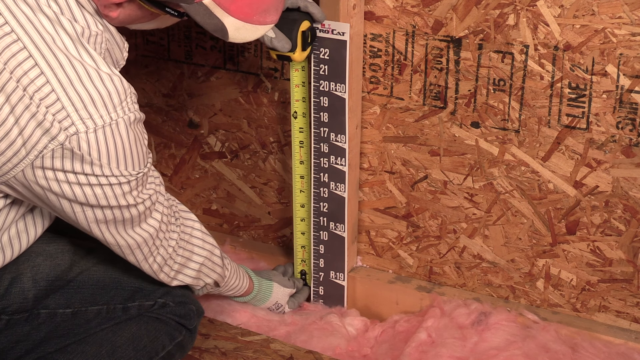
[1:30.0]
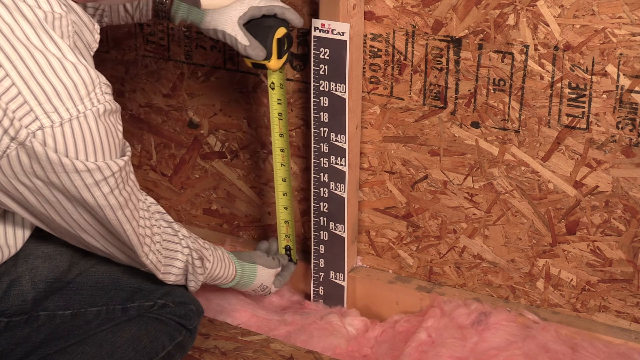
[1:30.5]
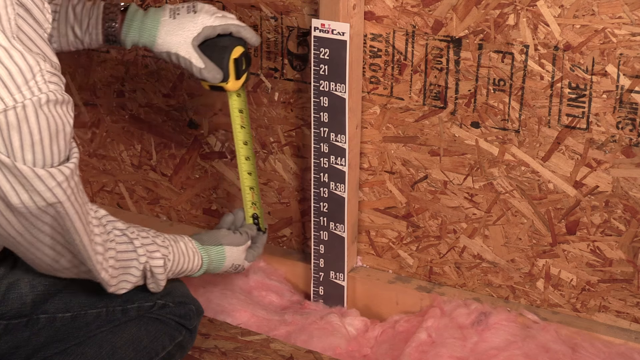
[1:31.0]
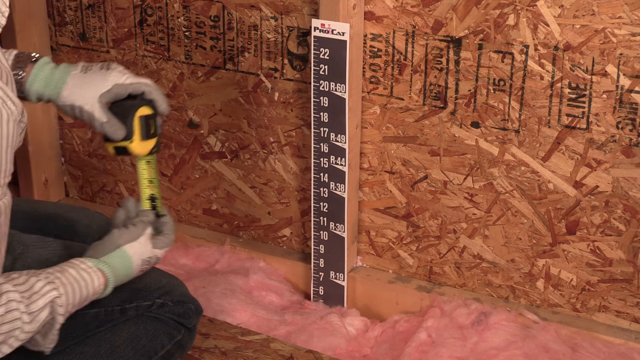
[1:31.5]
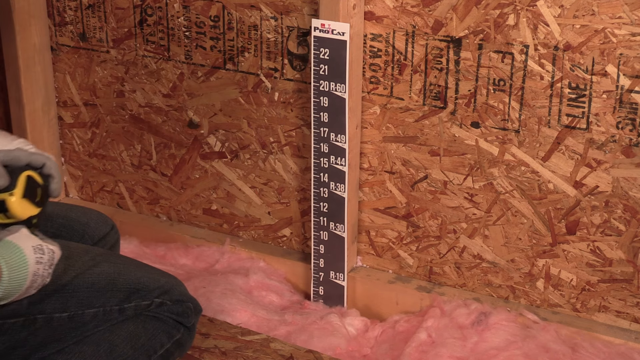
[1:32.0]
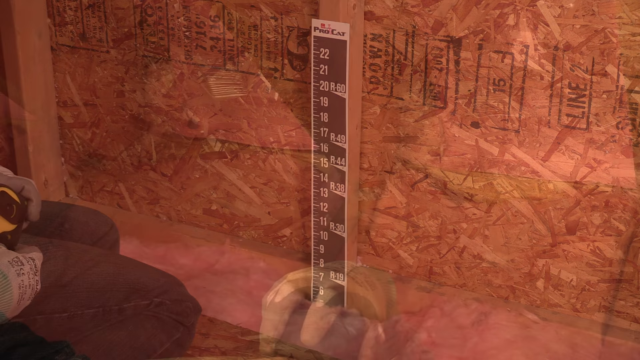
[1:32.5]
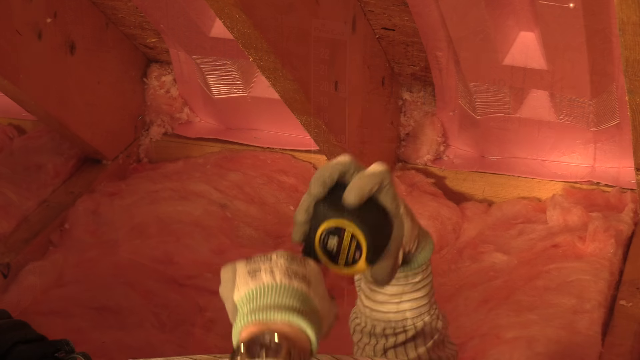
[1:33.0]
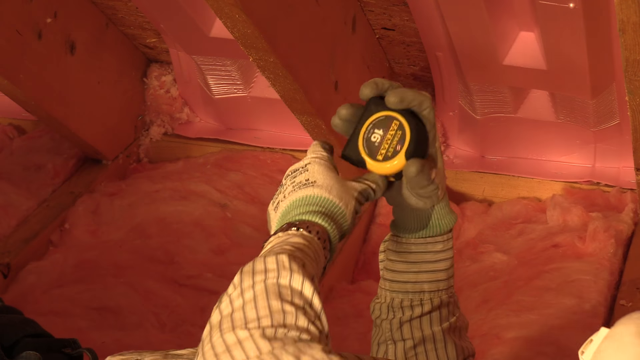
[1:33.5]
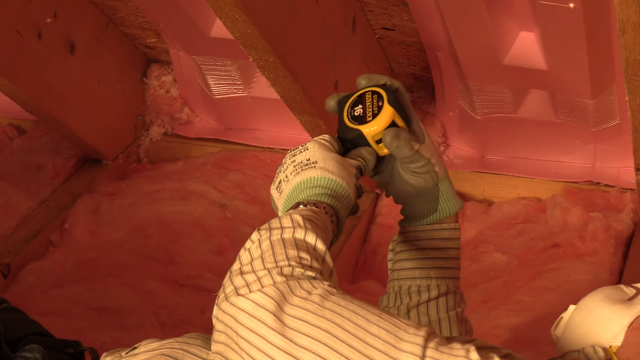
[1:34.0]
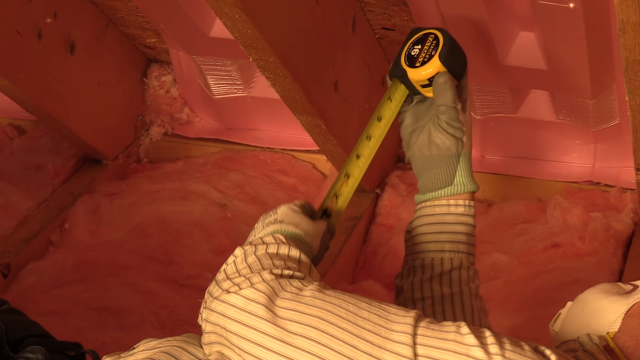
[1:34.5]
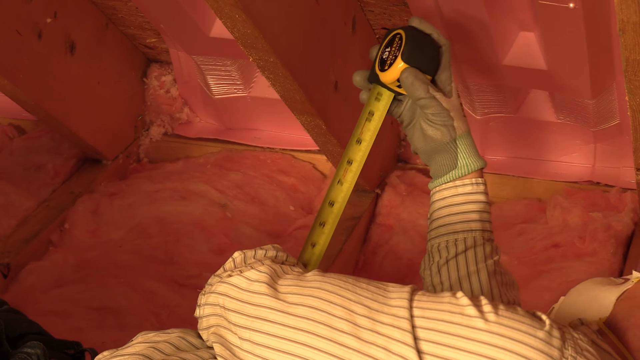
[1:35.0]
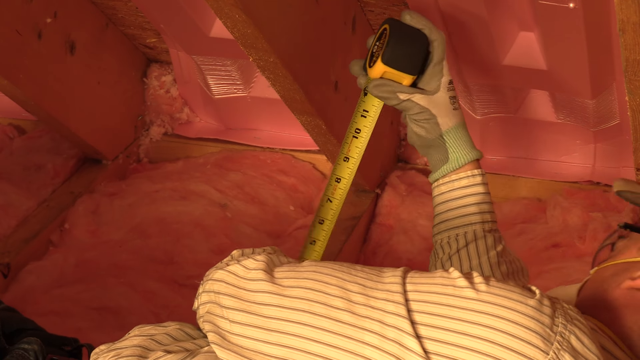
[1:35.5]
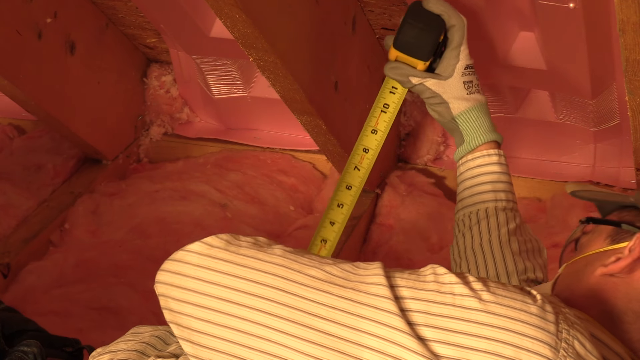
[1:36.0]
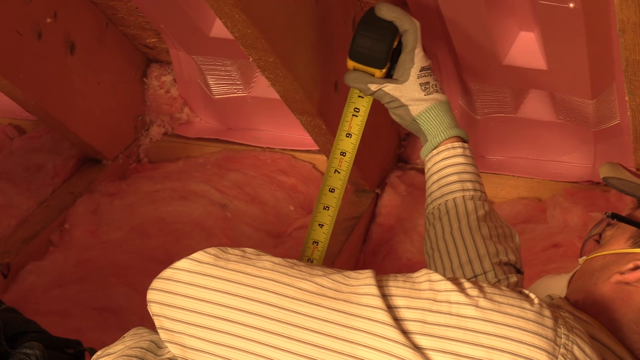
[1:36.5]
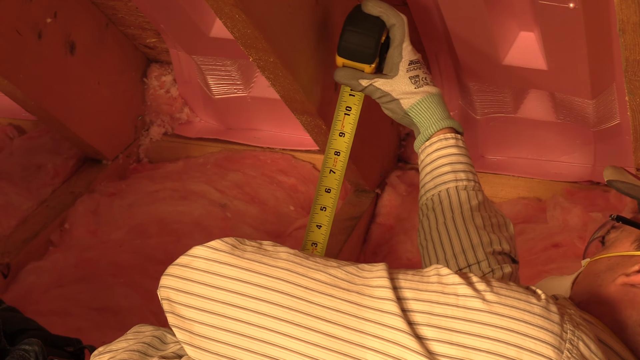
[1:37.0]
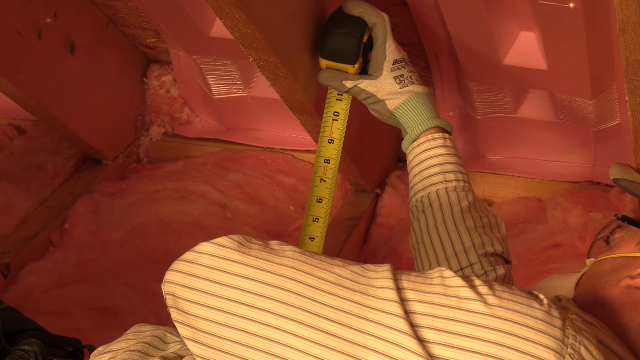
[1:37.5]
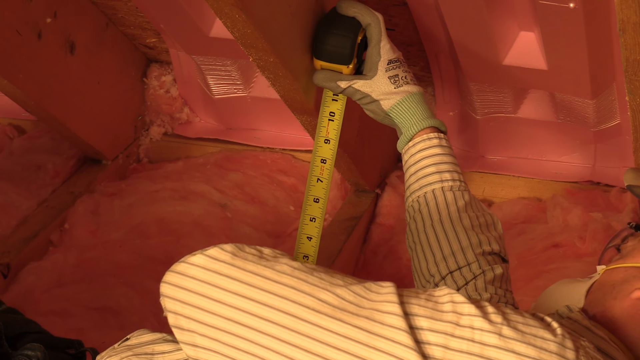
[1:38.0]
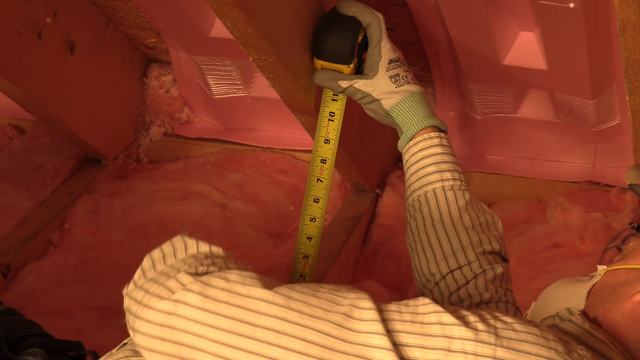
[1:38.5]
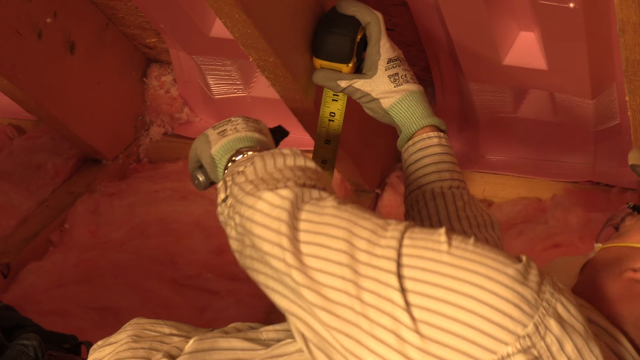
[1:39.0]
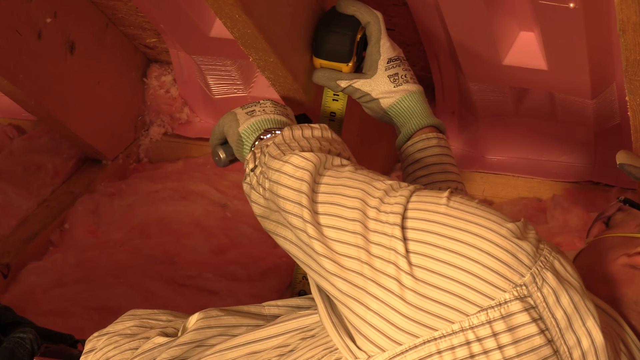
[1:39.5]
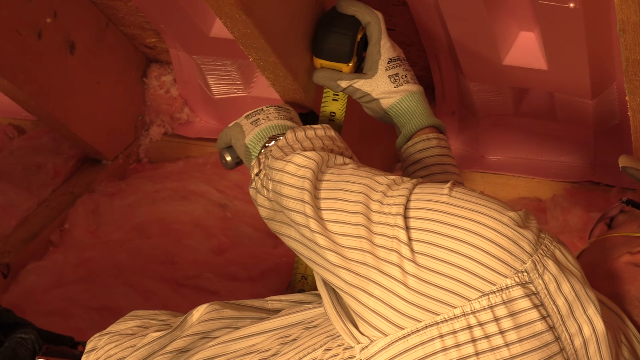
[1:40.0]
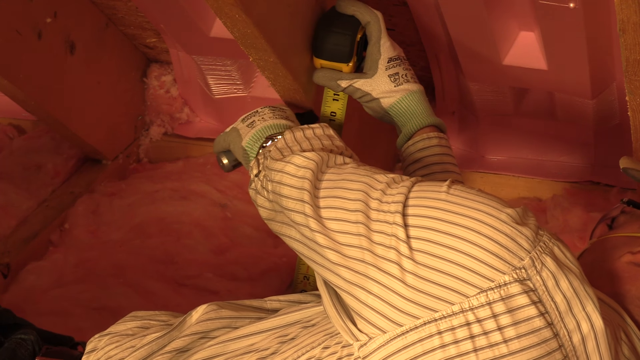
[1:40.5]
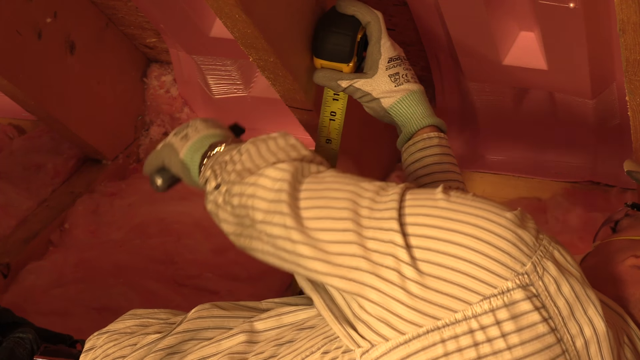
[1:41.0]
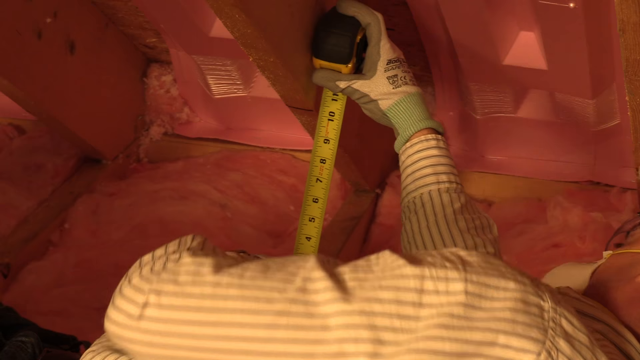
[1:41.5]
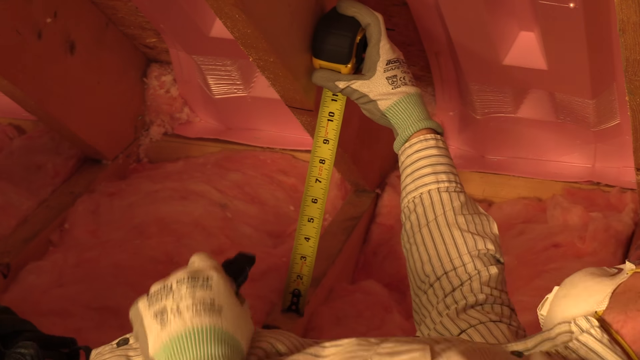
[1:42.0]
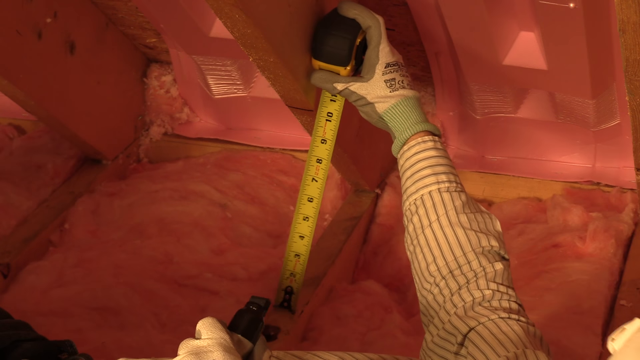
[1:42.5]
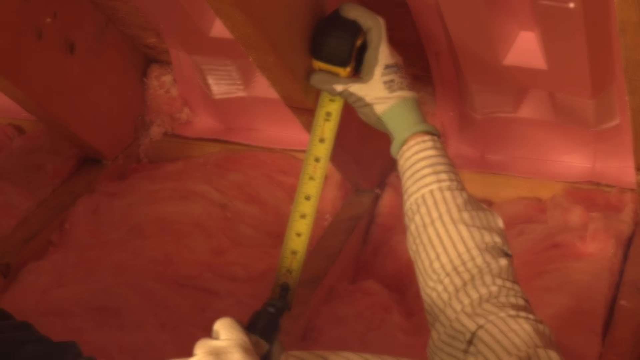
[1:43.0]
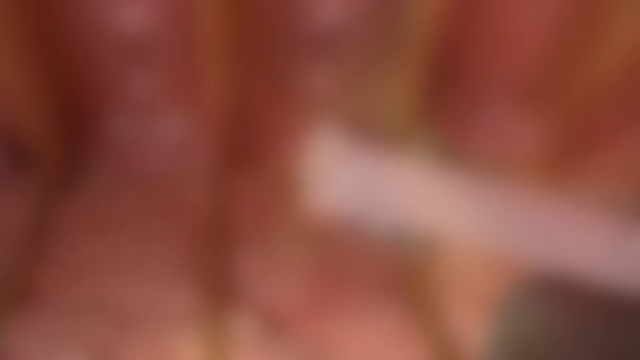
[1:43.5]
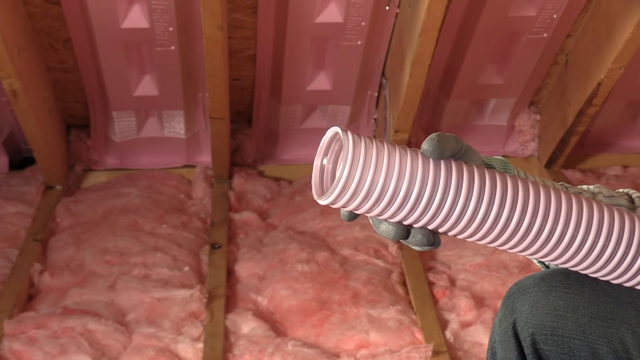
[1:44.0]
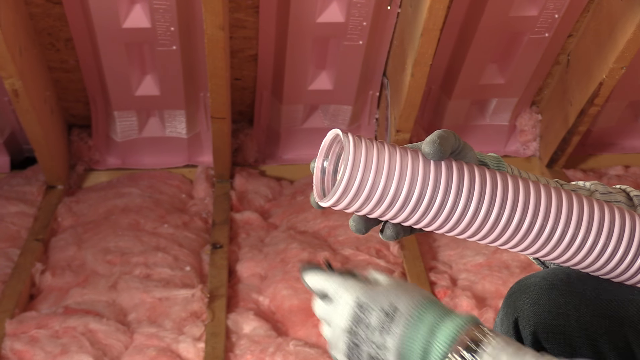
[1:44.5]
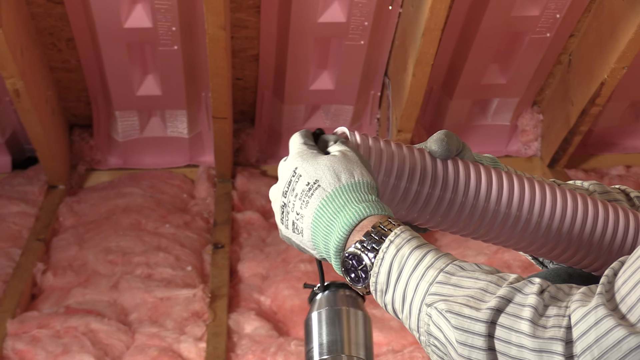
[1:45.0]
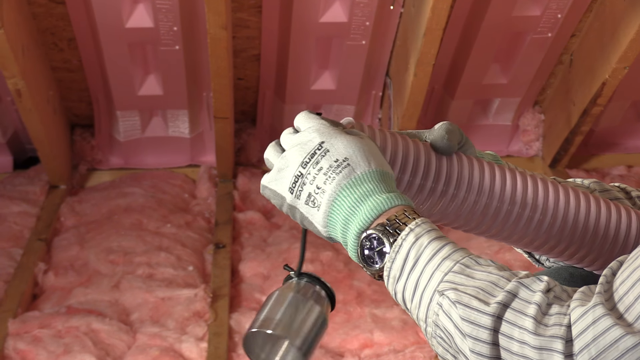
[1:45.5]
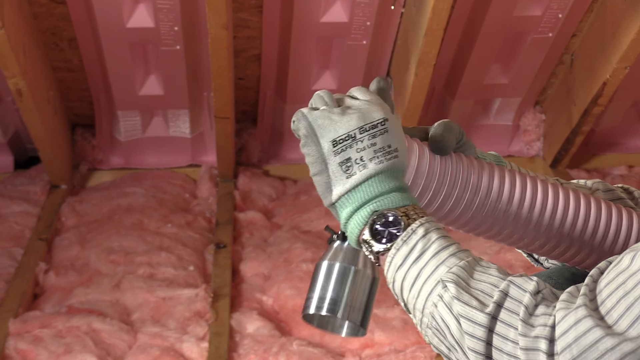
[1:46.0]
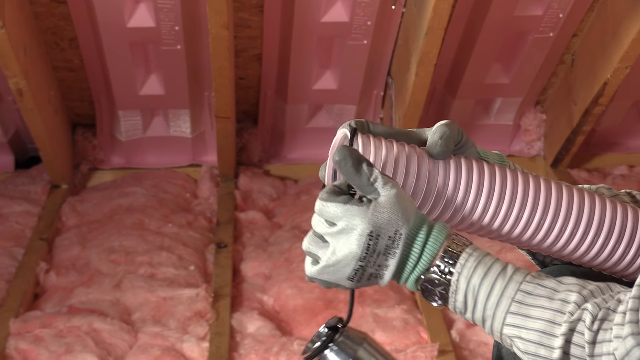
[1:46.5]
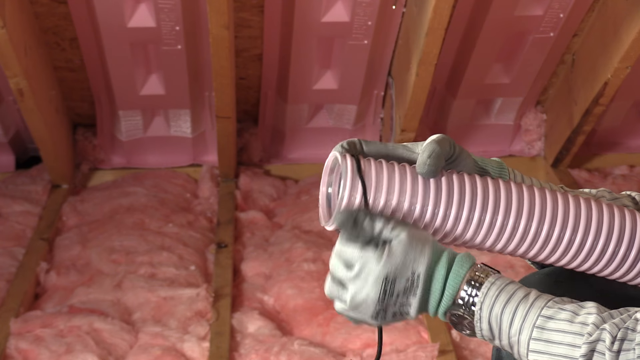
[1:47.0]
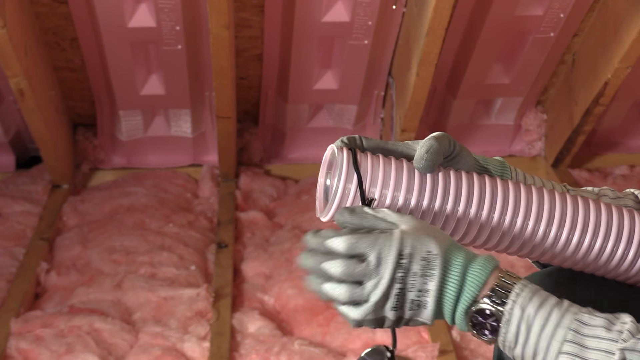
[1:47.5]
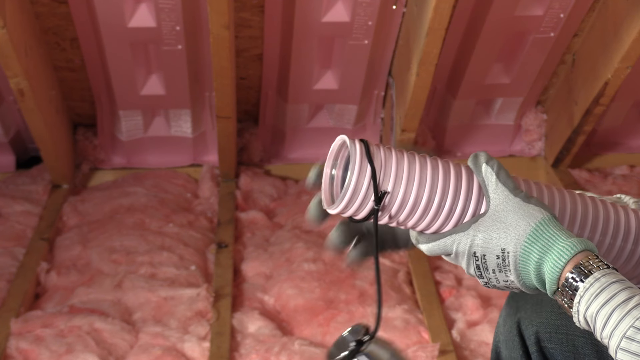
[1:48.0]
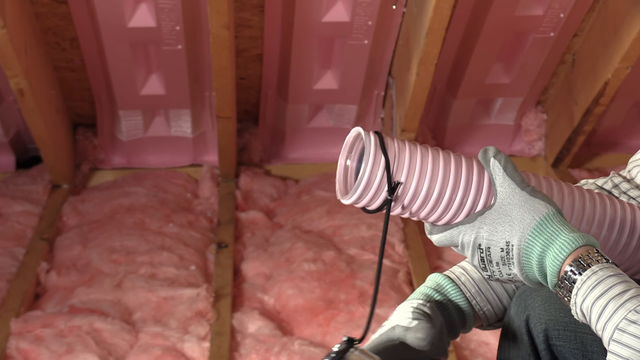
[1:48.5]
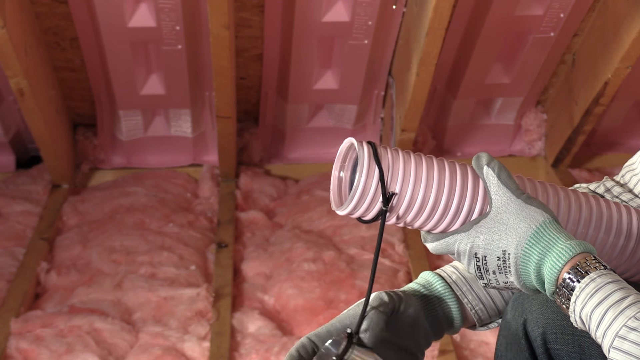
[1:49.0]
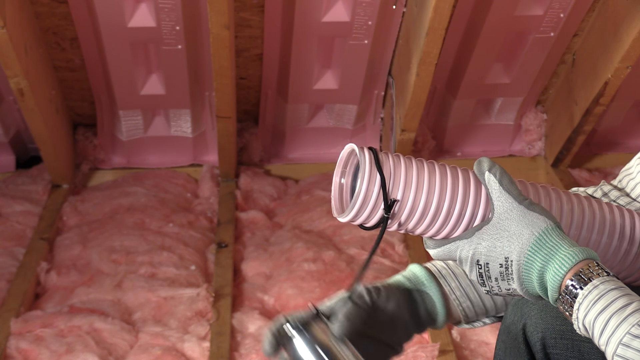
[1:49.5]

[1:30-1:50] In an attic, a man on the left-hand side of the frame holds a metal measuring tape against the wall just to the left of a black and white piece of paper attached to the board on the wall. He wears glasses, a white mask, a ball cap, a gray and white shirt, and black trousers. The scene changes and he is lying across the bottom of the frame, on his back, maybe on his right side. He holds the yellow and black metal measuring tape at an angle, seemingly measuring from a board of the angled inside of the roof to the board across the attic floor. He reaches up next to the tape and looks like he makes a mark on the wood with a utility knife, maybe to mark a measurement on the board that angles up. The scene changes again: the man is now on the right, with only part of his leg and his arms visible, holding the pink hose, which has a piece of black fabric tie with a metal cap-looking thing attached to it.